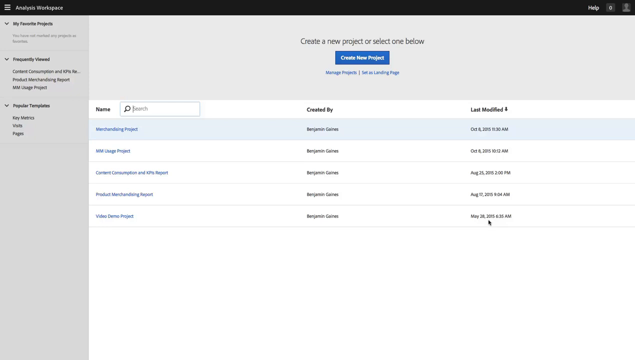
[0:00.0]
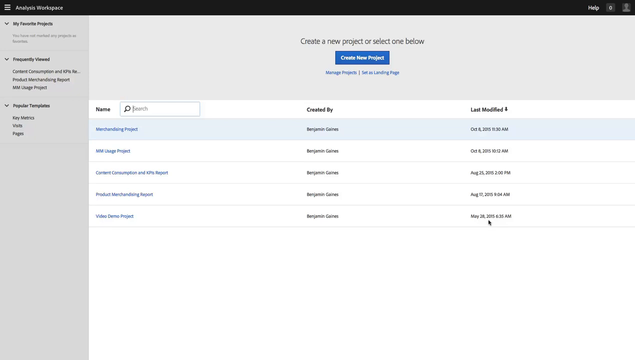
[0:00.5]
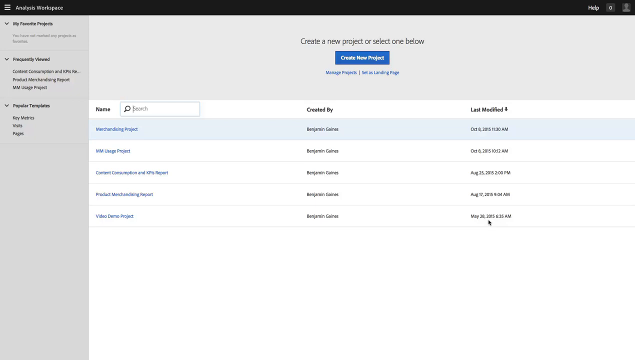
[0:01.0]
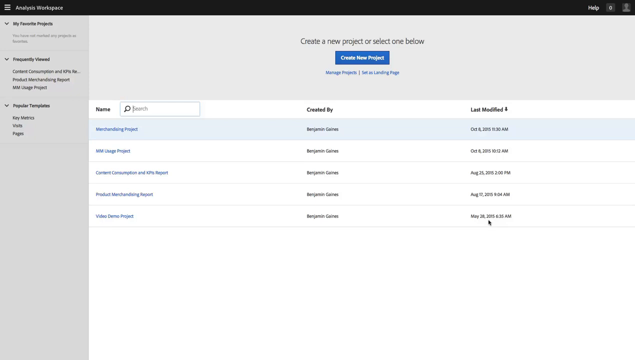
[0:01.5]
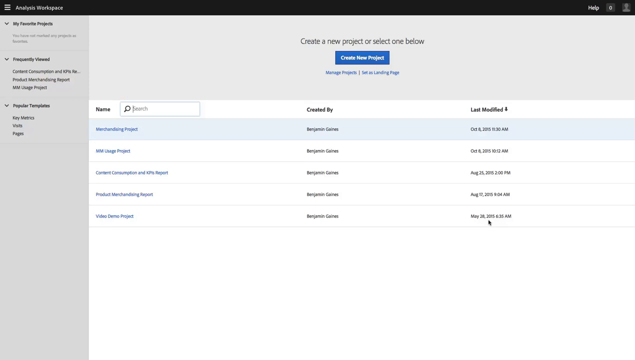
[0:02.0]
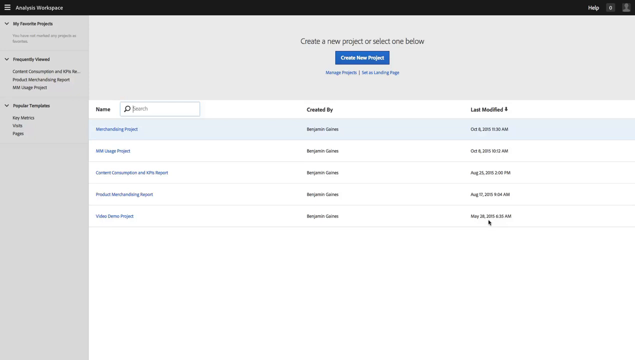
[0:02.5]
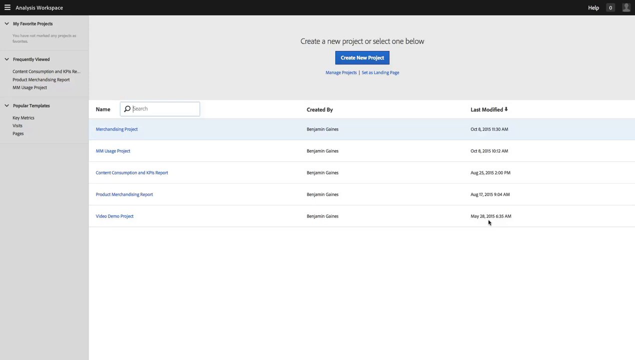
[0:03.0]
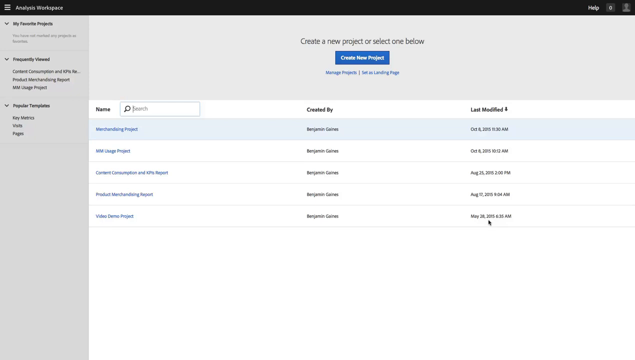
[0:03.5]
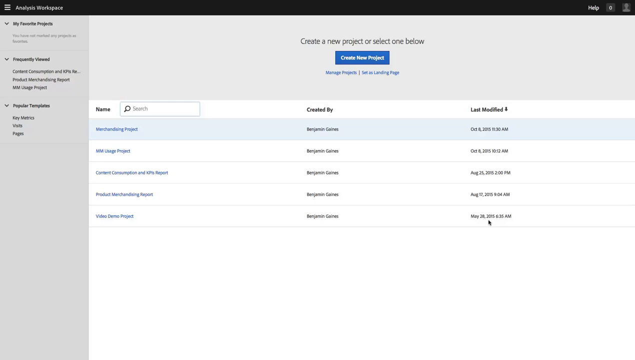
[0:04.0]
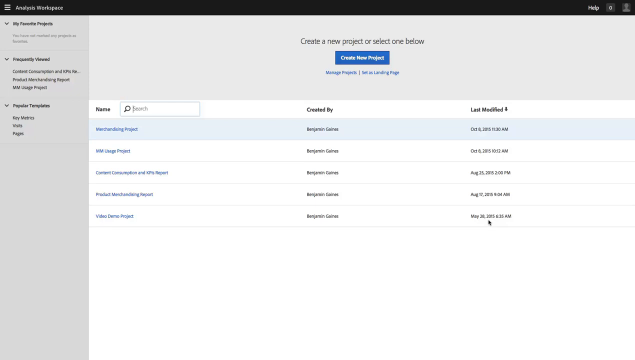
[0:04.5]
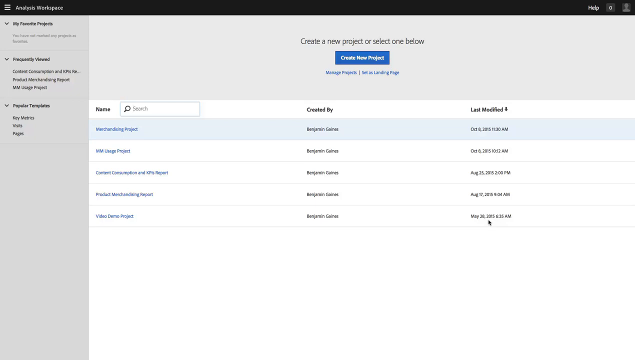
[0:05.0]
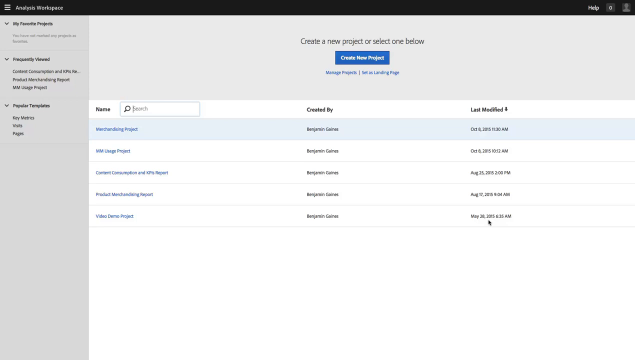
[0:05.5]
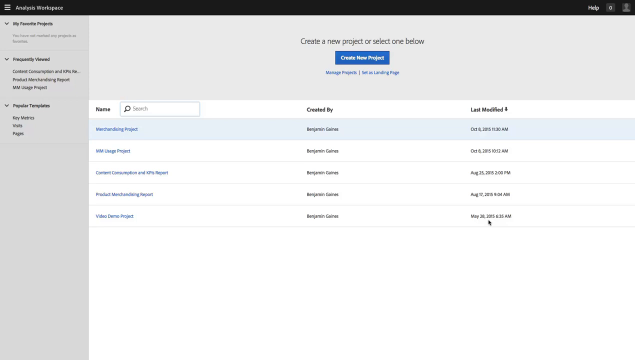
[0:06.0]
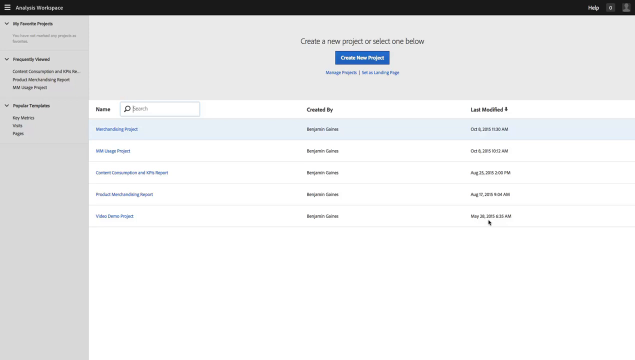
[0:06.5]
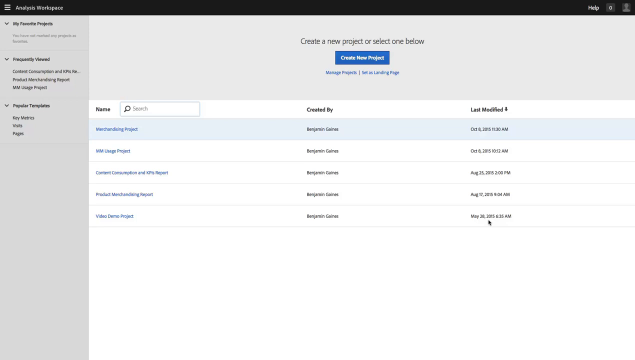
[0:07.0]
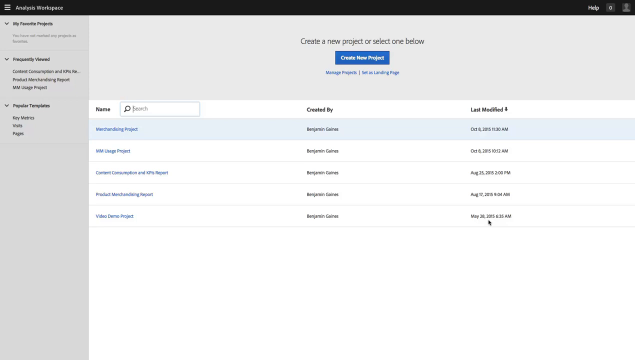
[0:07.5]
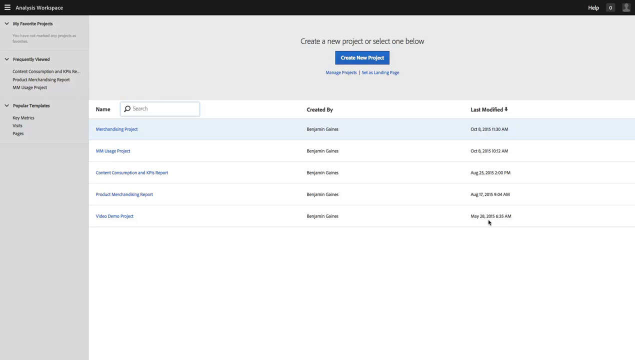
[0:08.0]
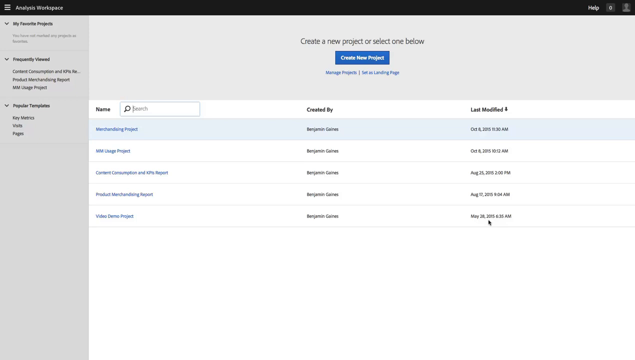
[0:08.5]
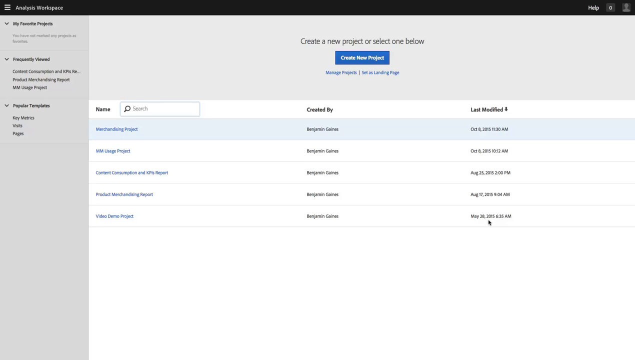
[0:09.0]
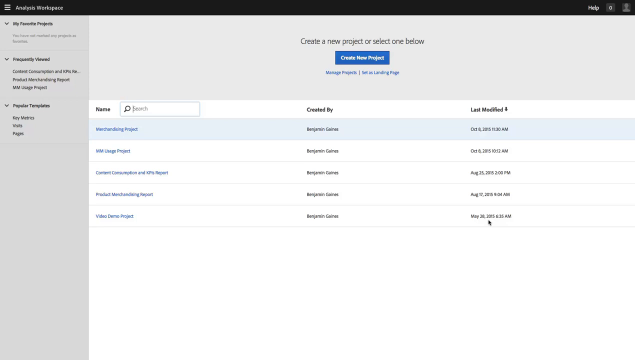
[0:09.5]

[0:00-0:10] A computer screen shows an application titled "Analysis Workspace." Down the left side is a list of items: "My Favorite Projects," then "Frequently Viewed," and third "Popular Templates." Toward the top center on the right, text reads "Create a new project or select one below," with a blue button labeled "Create New Project." Below that is a list of five projects organized by name, created by, and last modified. All the projects seem to have been created by the same person, and they are sorted by last modified date. A text cursor blinks in the search field above the list of project names, and the mouse pointer is placed at the center below the last modified project date.